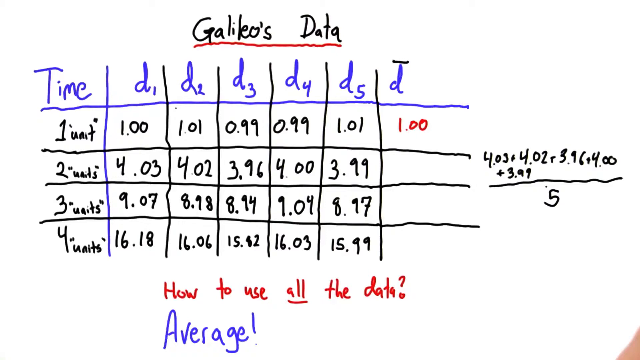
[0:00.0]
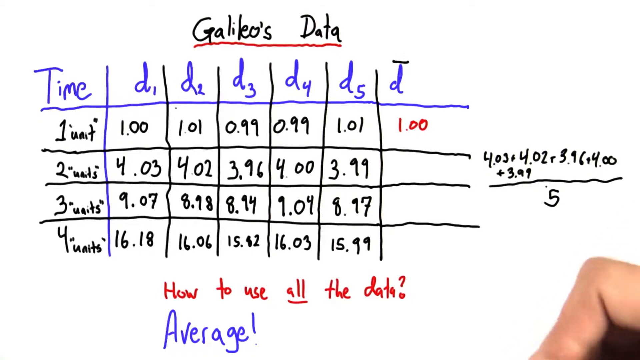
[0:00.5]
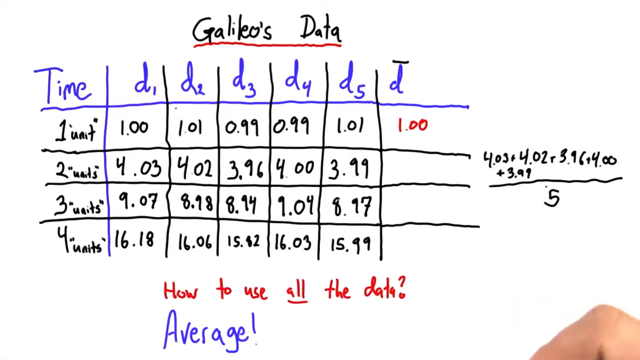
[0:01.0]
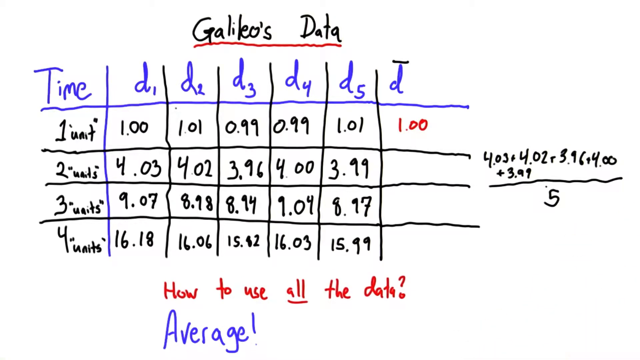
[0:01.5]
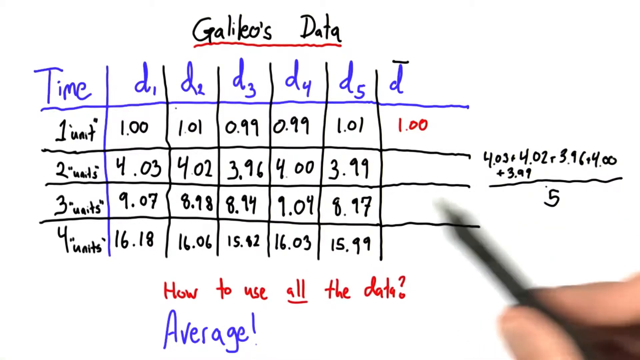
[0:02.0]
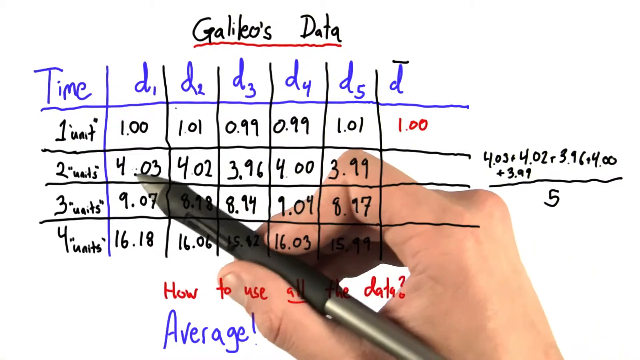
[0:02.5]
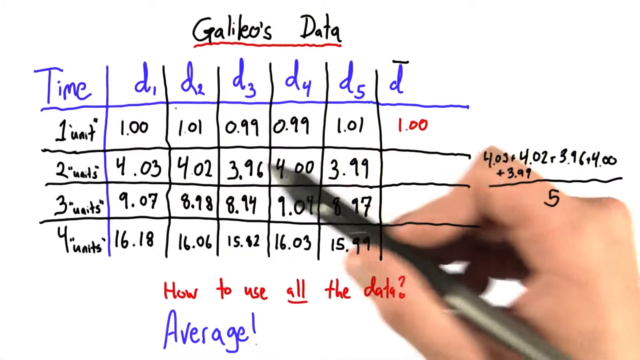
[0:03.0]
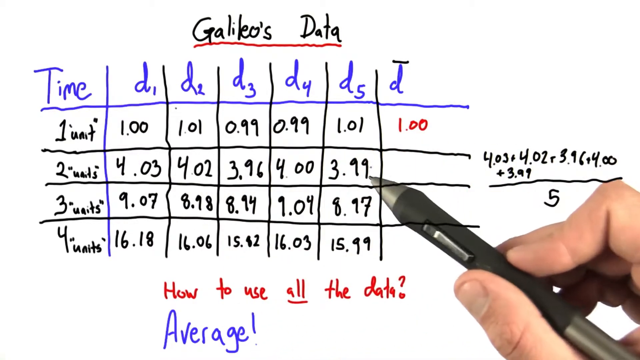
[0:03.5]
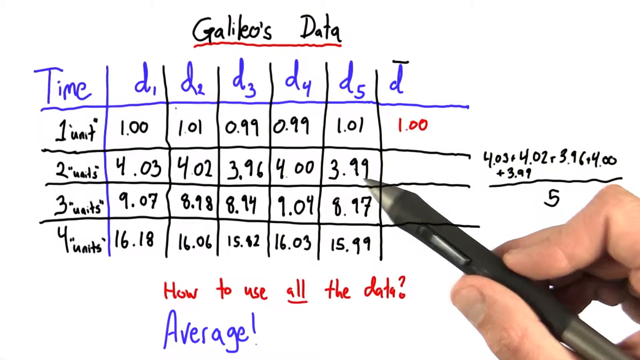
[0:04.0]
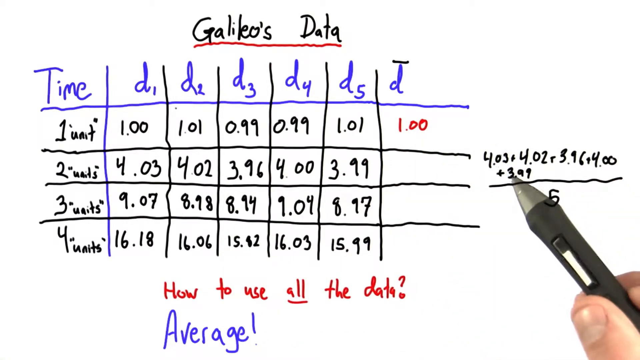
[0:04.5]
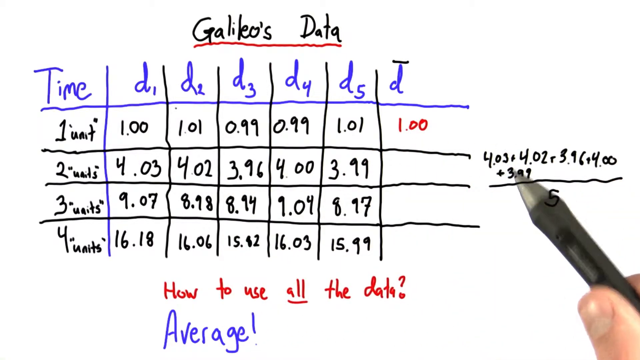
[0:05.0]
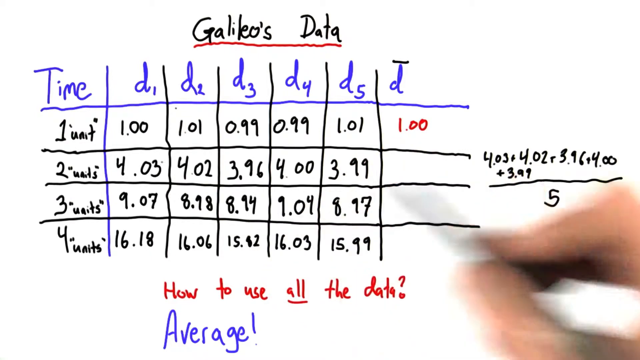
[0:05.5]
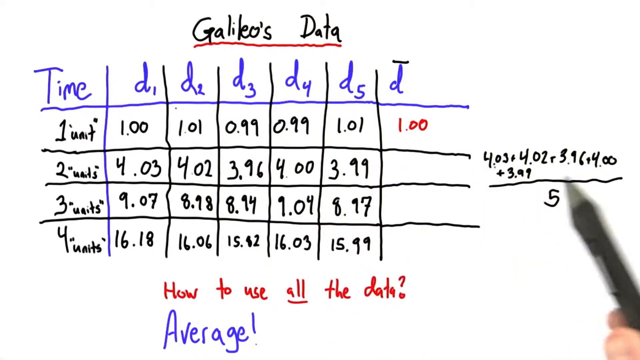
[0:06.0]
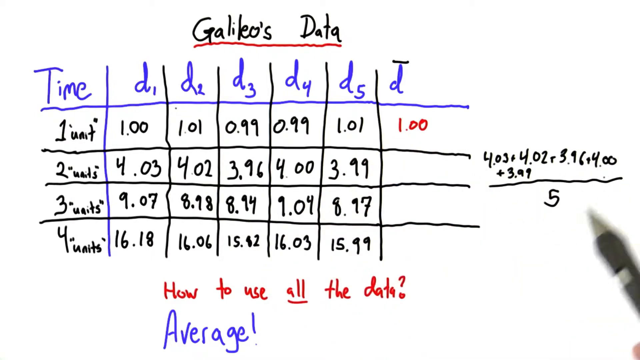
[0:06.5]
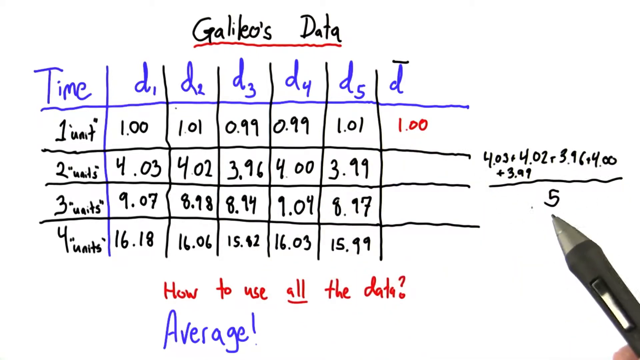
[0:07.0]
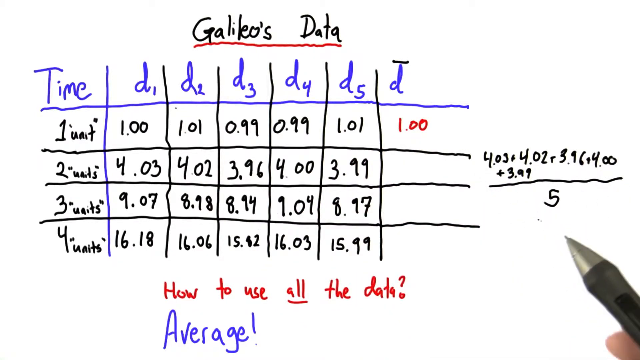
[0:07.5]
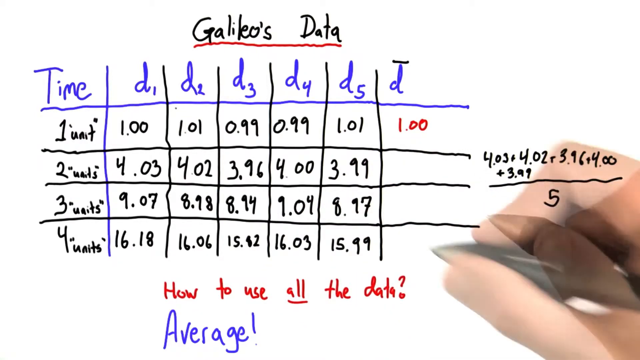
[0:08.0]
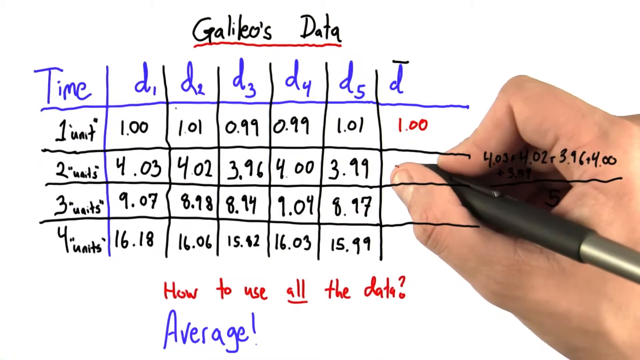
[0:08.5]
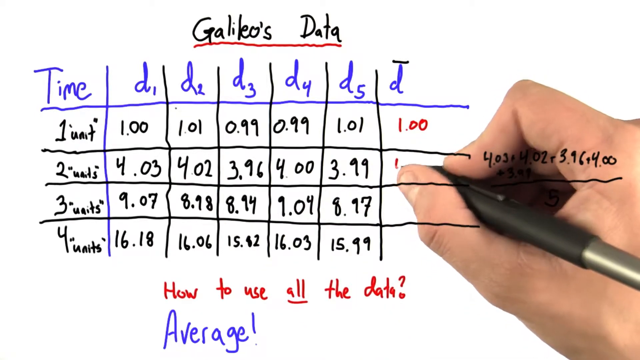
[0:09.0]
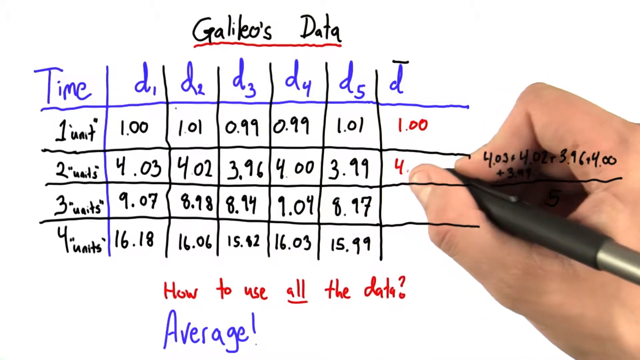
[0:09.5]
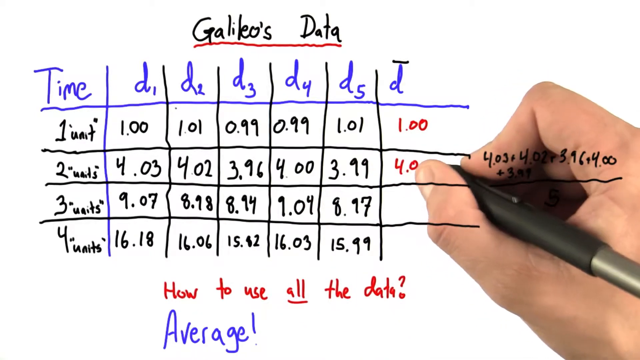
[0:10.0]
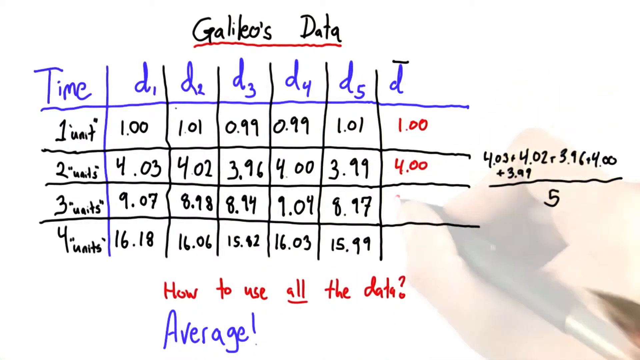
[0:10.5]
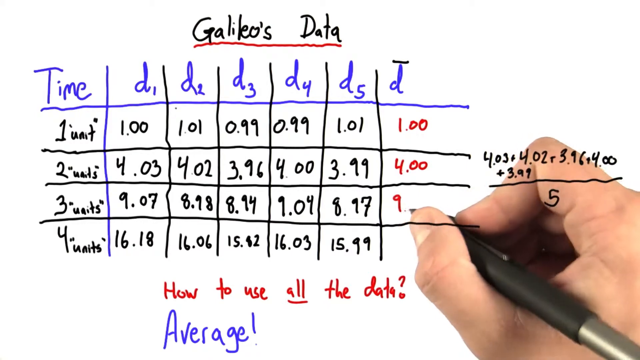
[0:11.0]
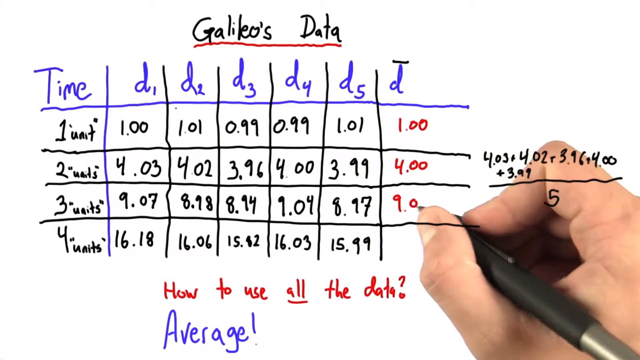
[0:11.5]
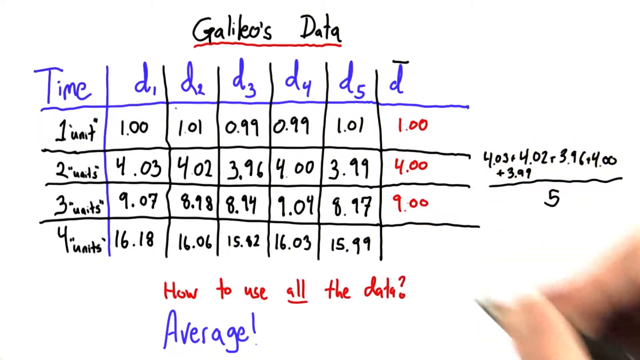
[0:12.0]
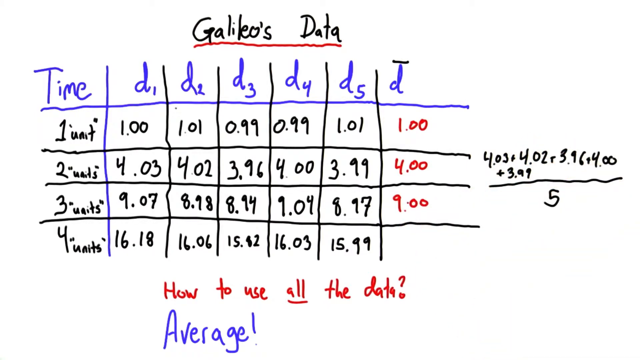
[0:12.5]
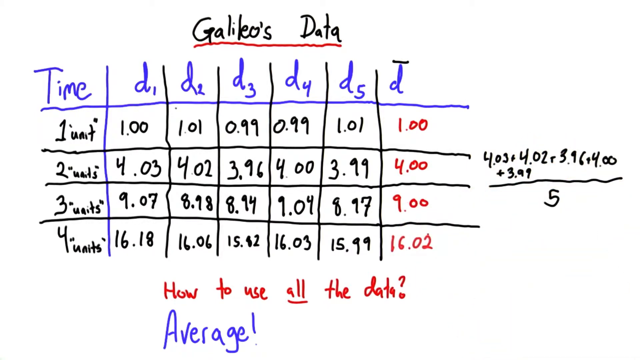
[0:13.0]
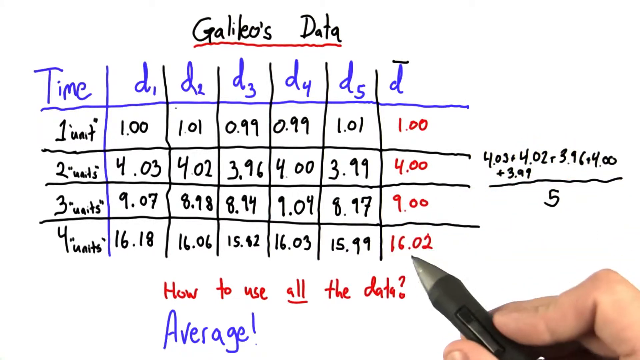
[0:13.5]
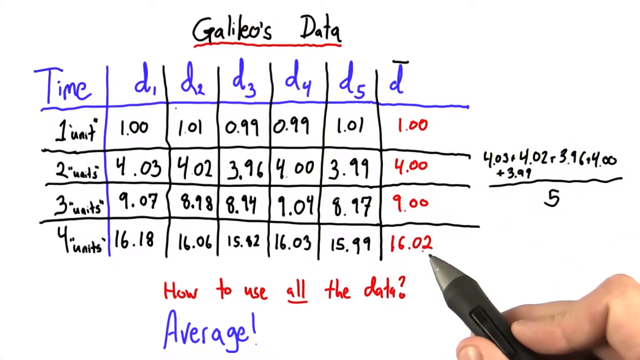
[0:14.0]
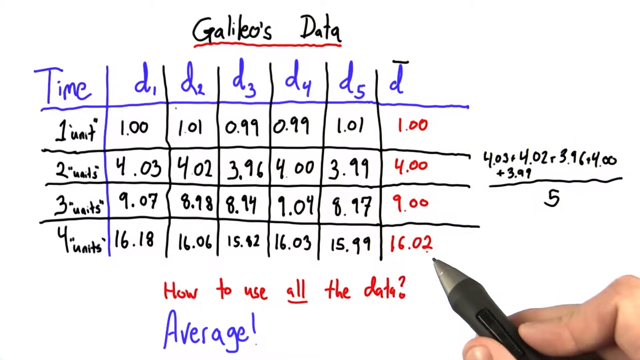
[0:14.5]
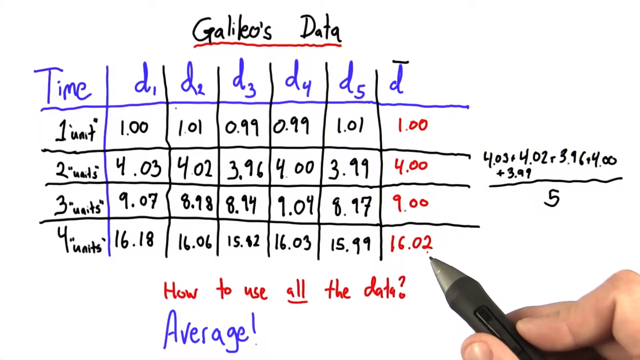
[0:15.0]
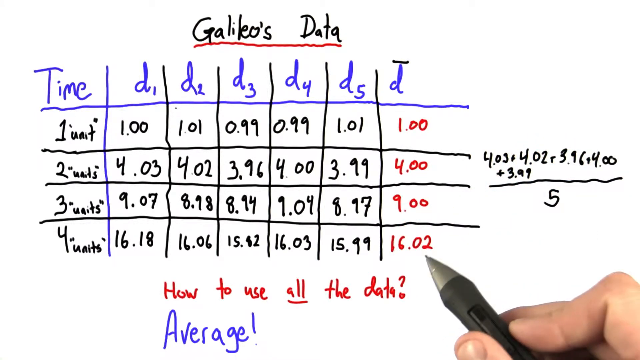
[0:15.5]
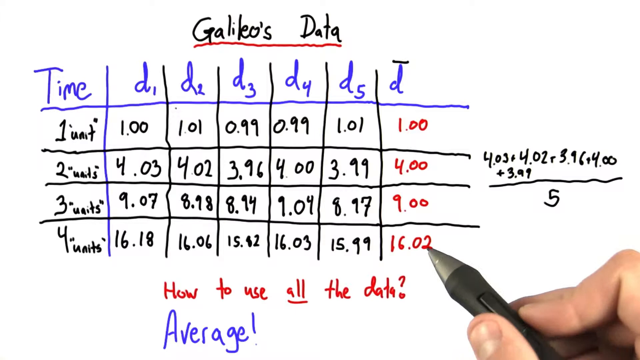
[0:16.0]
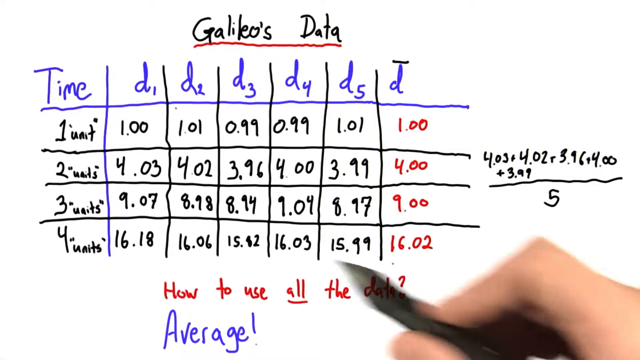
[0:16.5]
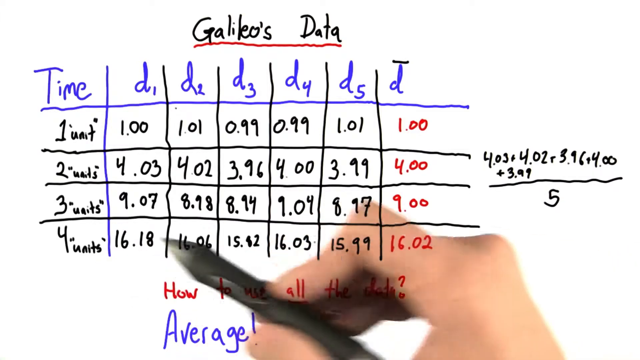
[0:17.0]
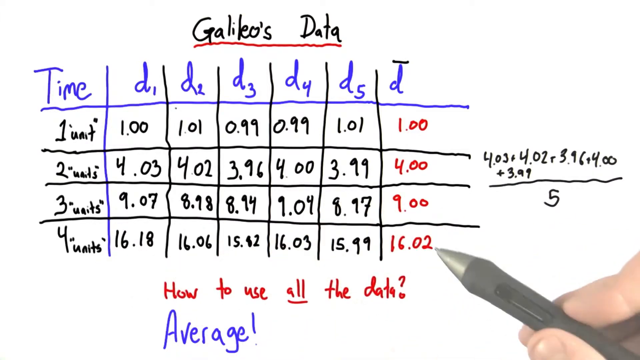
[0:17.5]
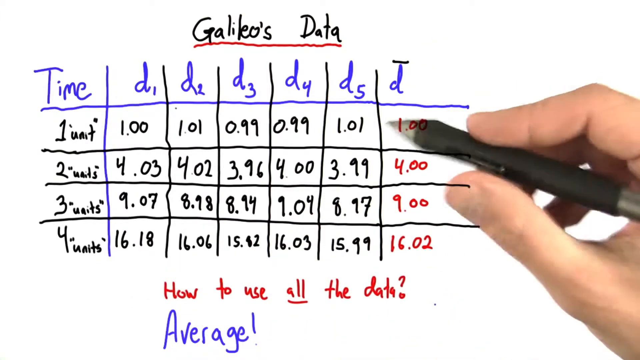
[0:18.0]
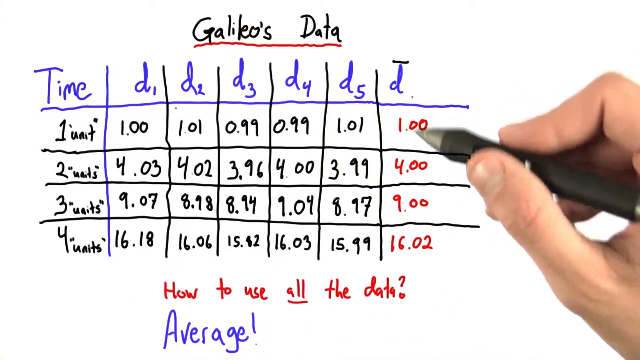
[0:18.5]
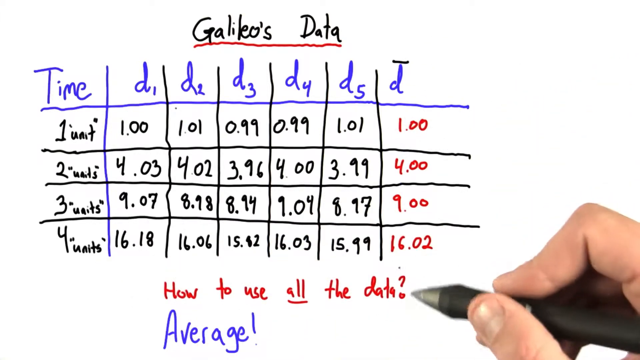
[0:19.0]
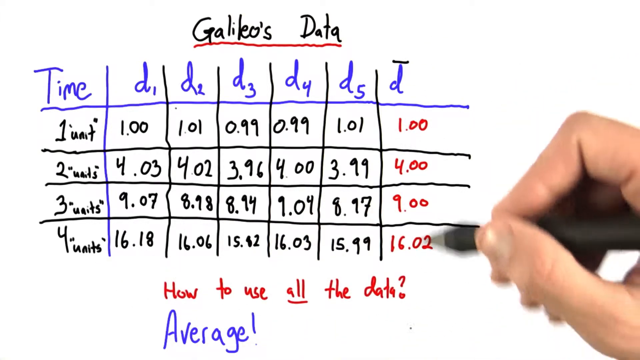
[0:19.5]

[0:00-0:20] A table of data is shown on a white background. At the top there is a heading in black letters underlined with a red line. The two quantities in the table are units and time, along with the average of time, labeled D with a line above it. The table lists one unit, two units, three units and four units, with the time measured for each across five measurements. The person in the video takes the average of the recorded times, adding the values and dividing by the number of measurements, which in this example is five, and shows the result of each addition and average.